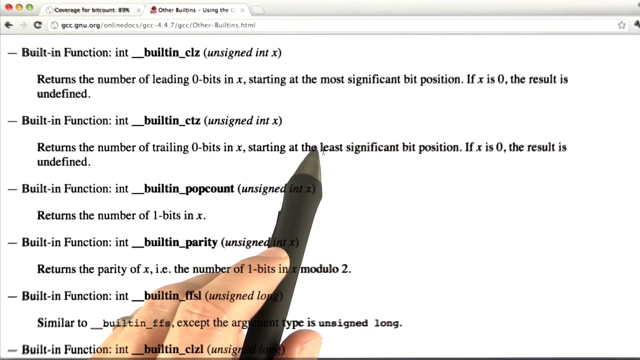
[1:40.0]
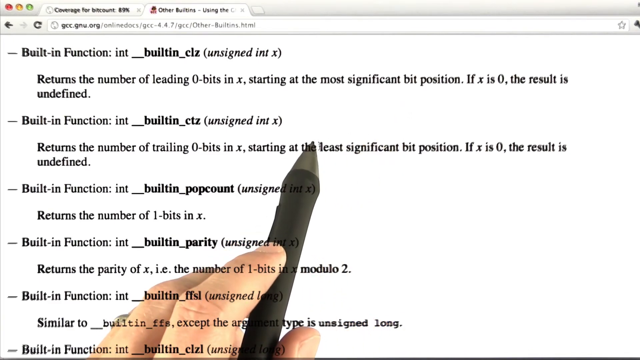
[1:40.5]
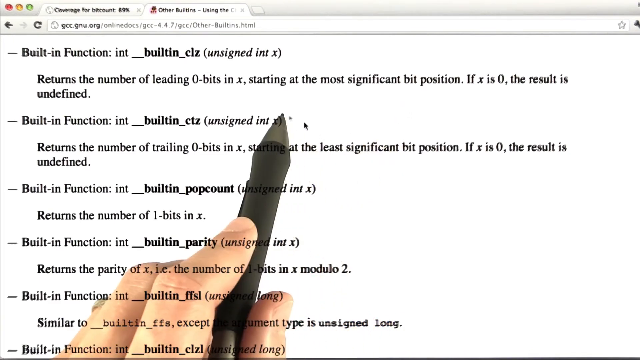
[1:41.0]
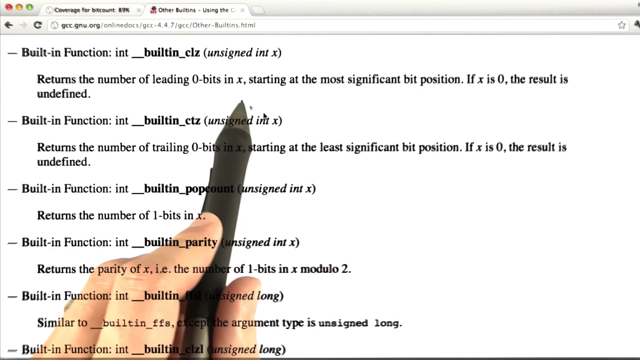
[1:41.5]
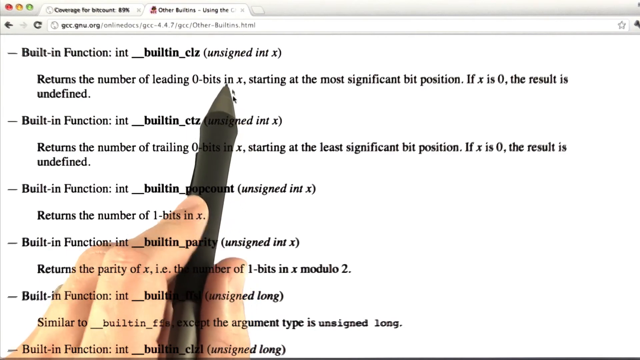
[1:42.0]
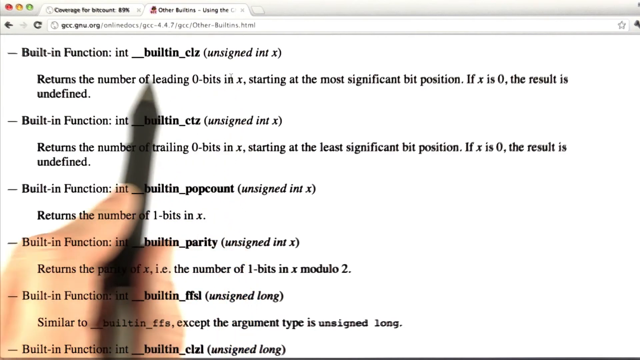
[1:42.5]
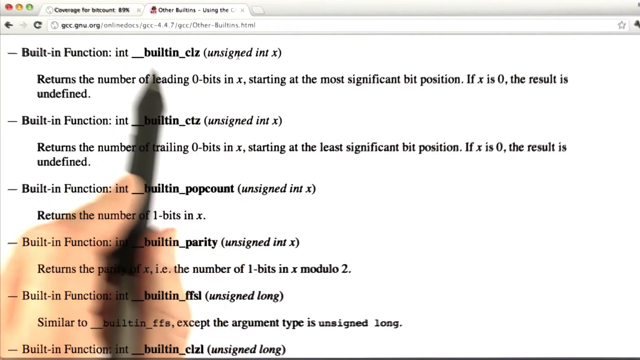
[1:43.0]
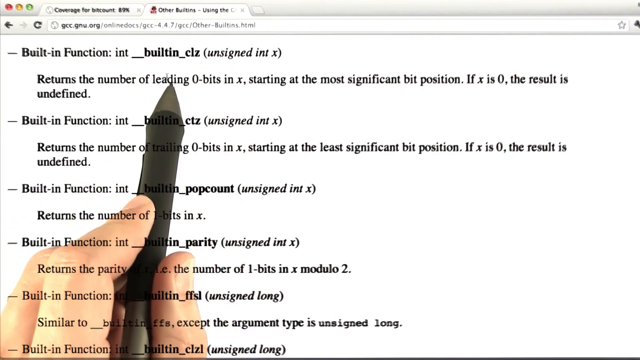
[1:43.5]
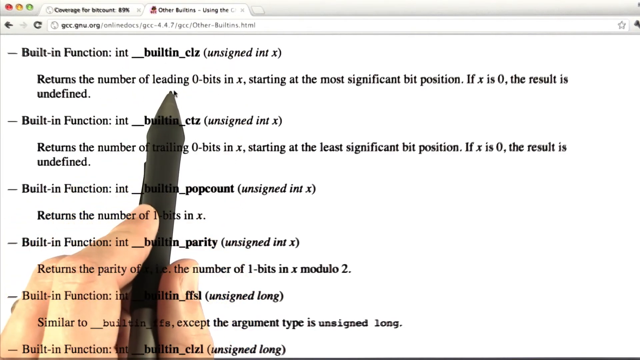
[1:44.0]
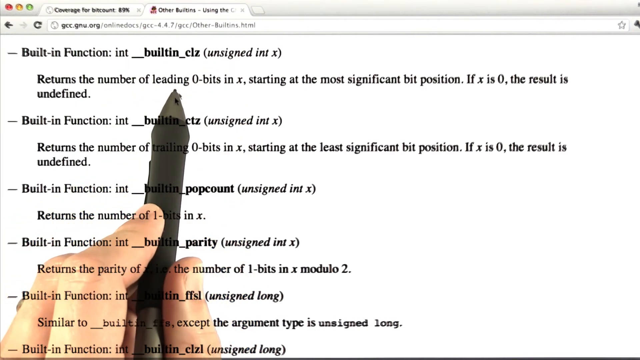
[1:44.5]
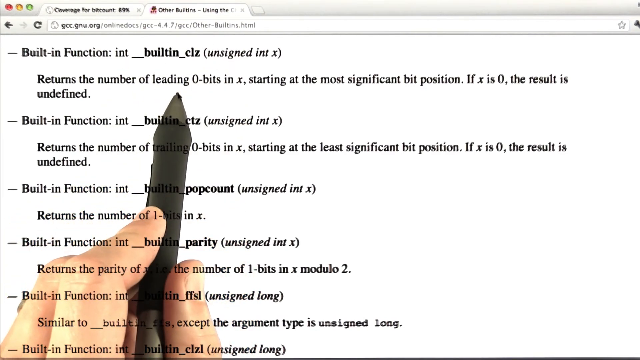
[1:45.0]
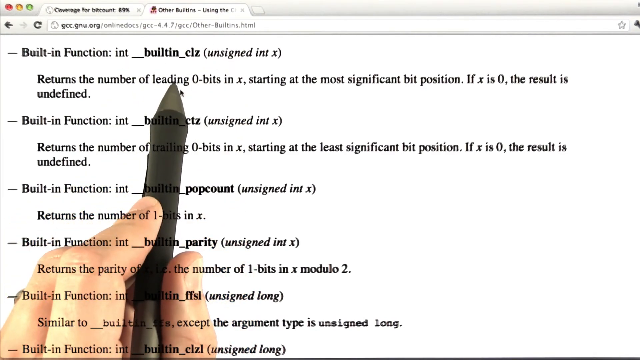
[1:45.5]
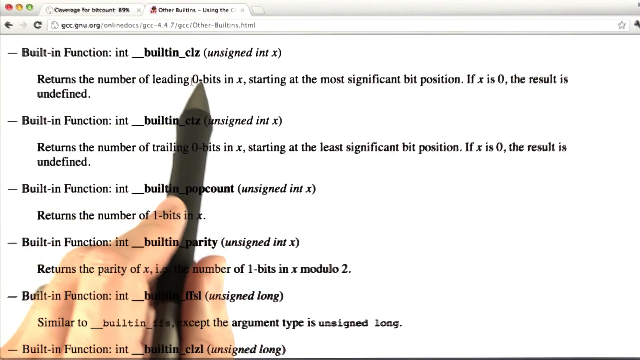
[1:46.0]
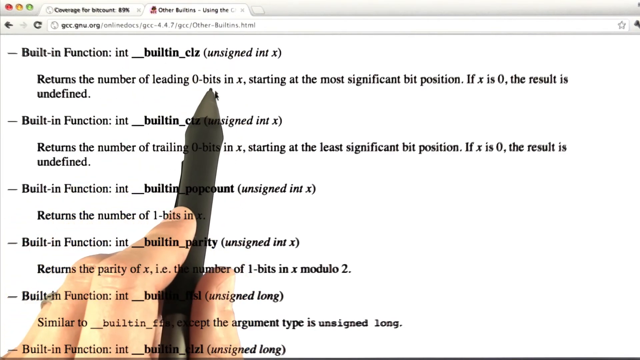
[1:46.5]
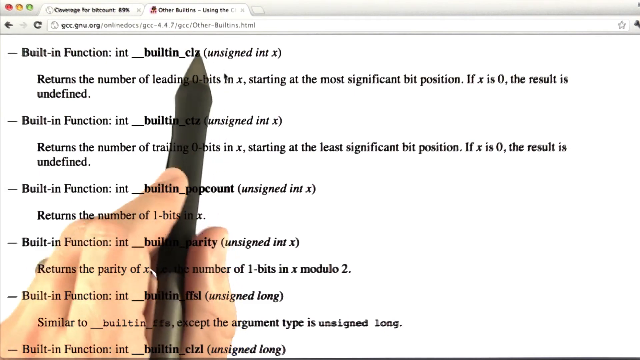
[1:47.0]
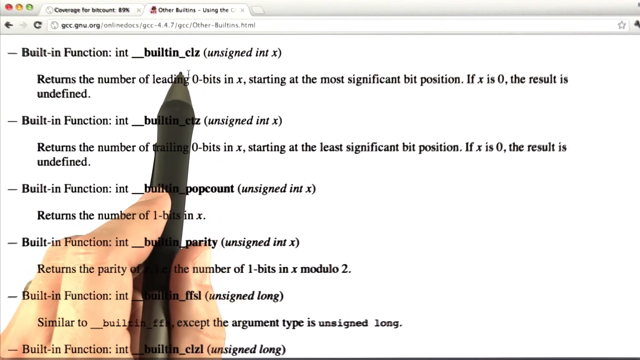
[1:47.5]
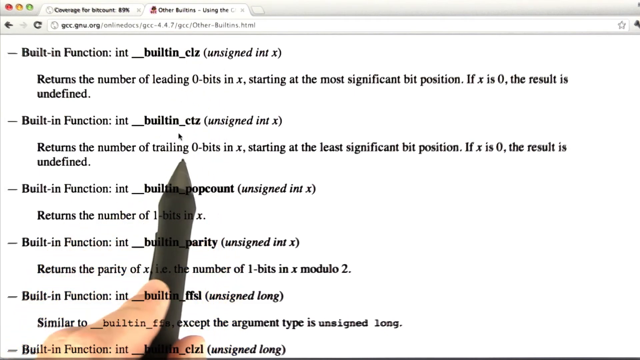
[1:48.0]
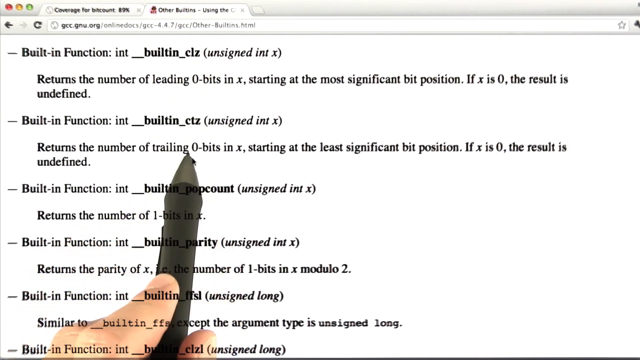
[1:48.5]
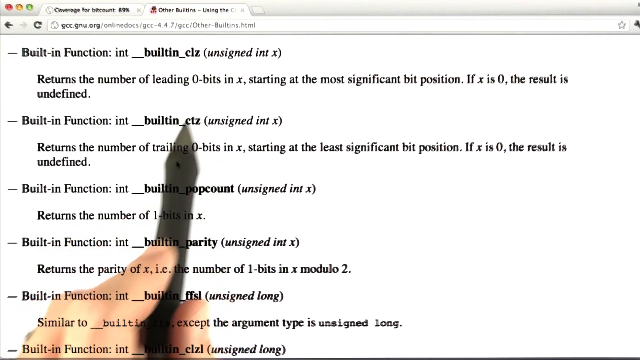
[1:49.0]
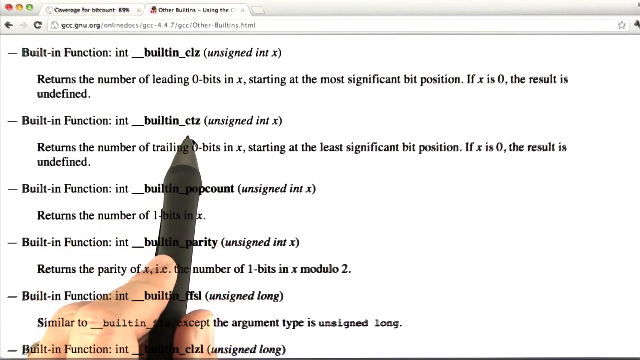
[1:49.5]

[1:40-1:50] HTML code is demonstrated on a computer screen with a white background. The instructor's hand and fingers are in the frame. His cursor is a stylus pen that he moves over the surface of the code to highlight things, showing different pieces of code in the built-in function area and highlighting areas with the cursor without leaving any marks. He stops on the second built-in functions line, which says "starting at least significant bit position". The code is in the built-in .html folder. The stylus pen is gray on the bottom, black in the center and gray in the back as he holds it, and it moves around continuously, encircling things without leaving any marks.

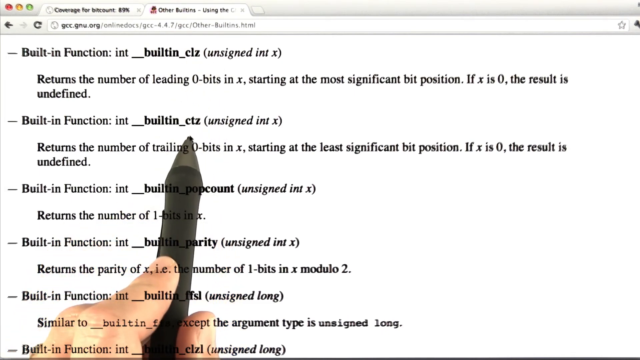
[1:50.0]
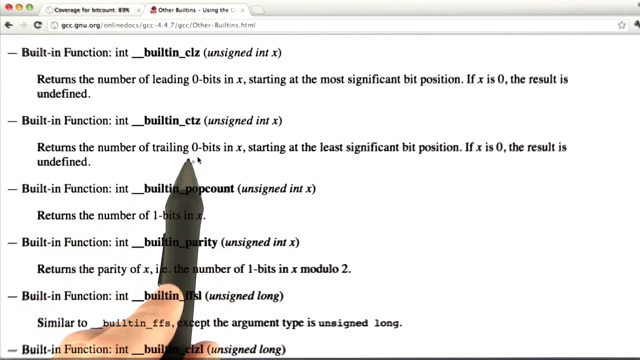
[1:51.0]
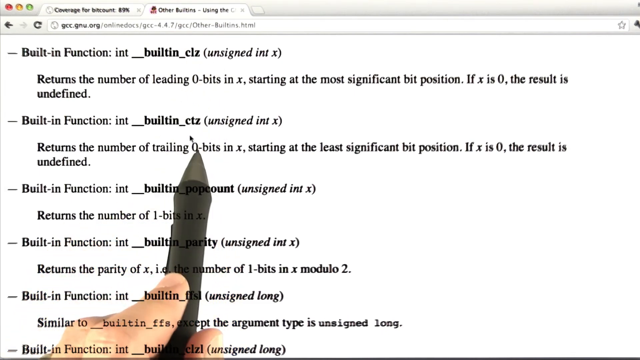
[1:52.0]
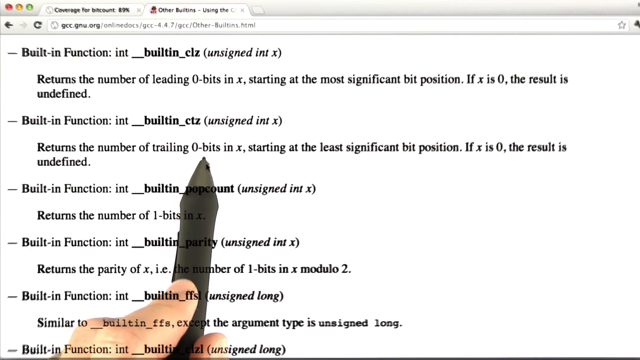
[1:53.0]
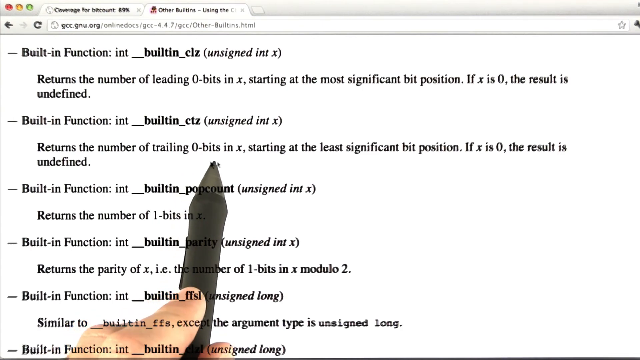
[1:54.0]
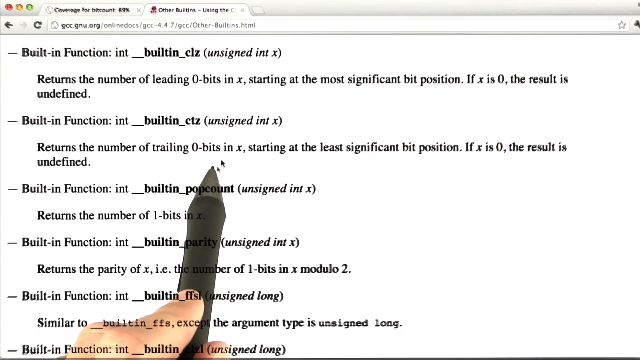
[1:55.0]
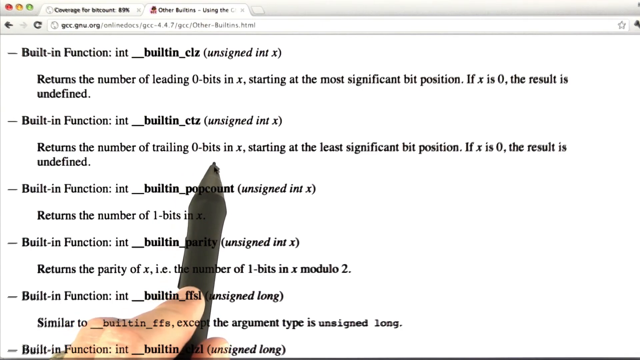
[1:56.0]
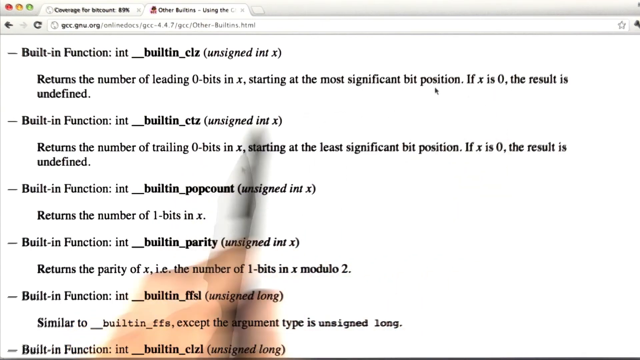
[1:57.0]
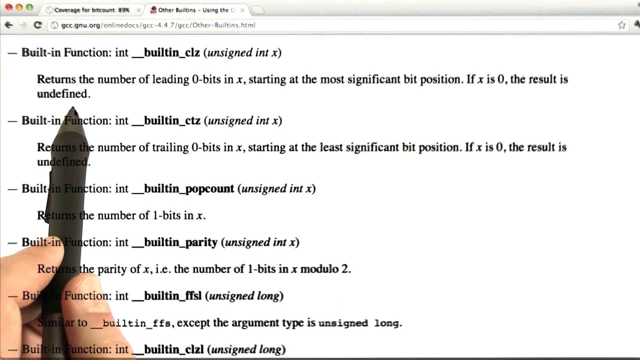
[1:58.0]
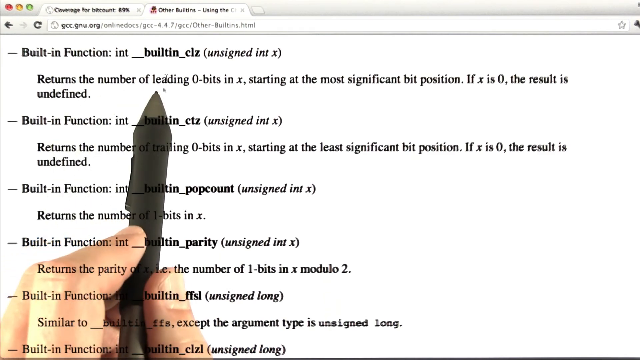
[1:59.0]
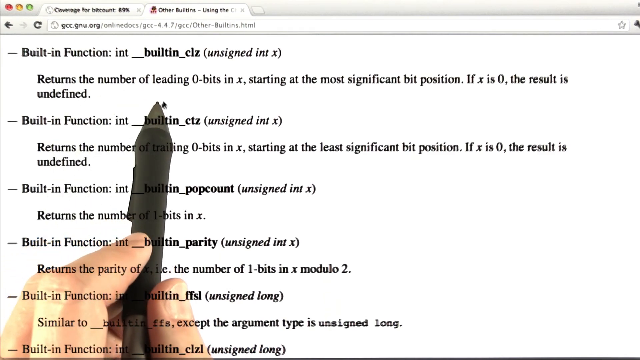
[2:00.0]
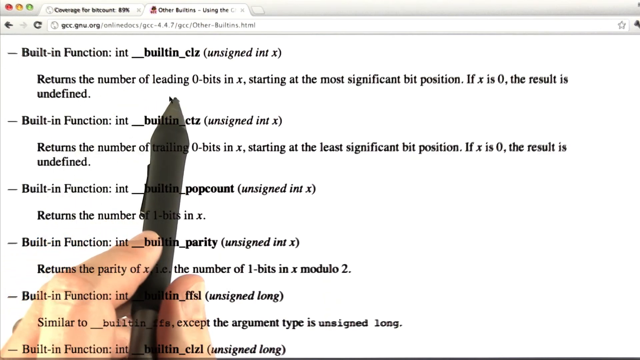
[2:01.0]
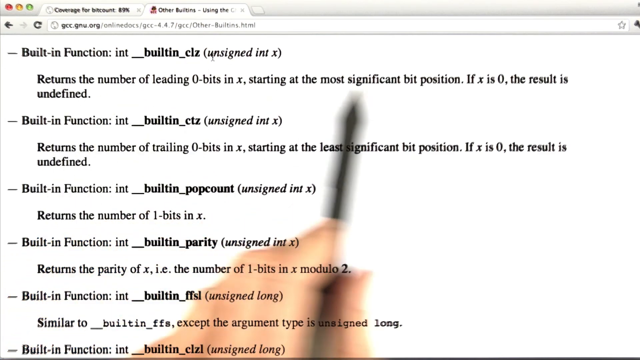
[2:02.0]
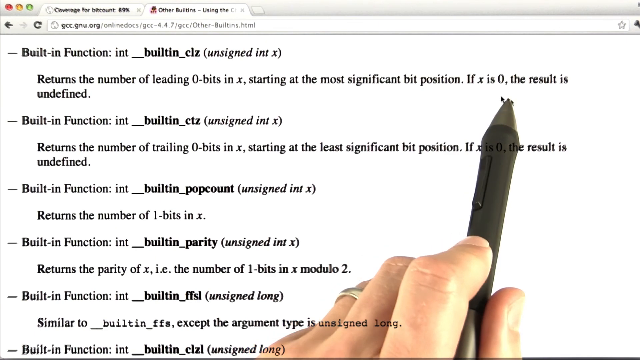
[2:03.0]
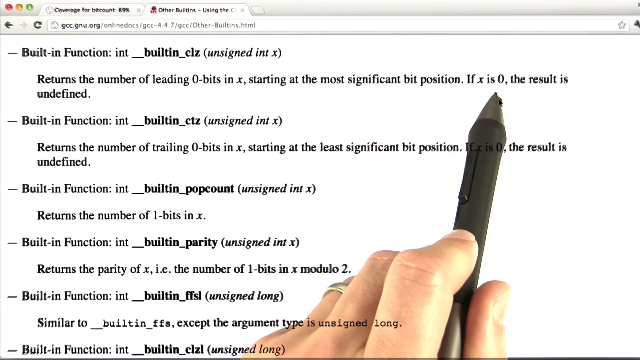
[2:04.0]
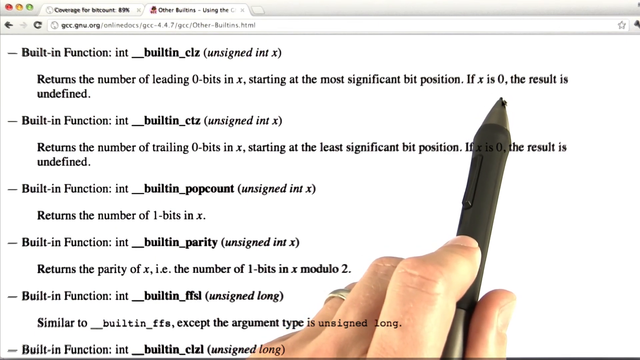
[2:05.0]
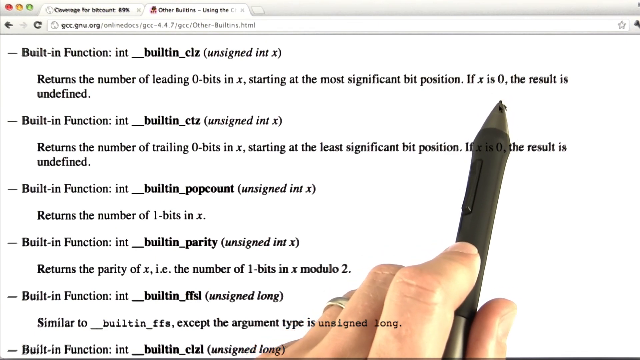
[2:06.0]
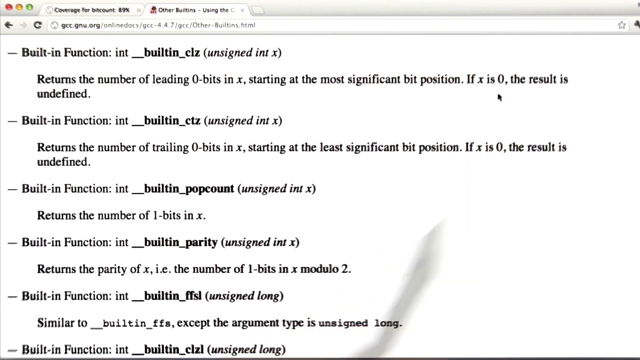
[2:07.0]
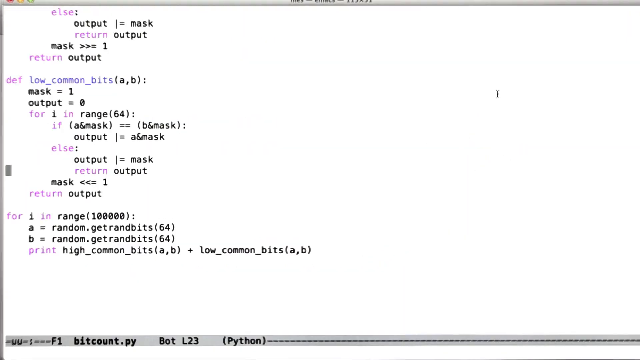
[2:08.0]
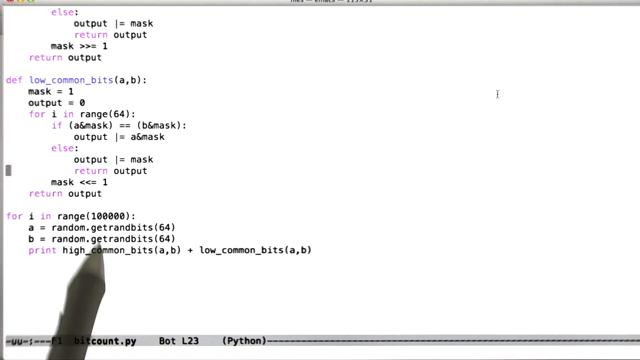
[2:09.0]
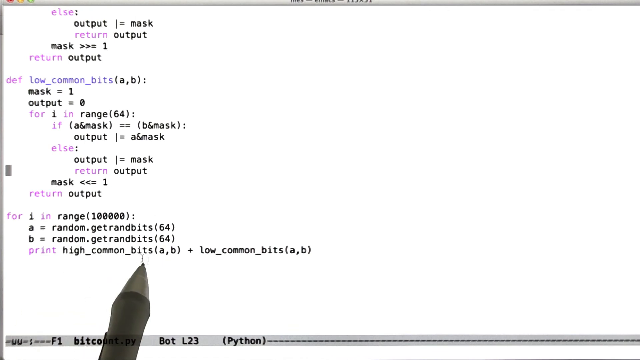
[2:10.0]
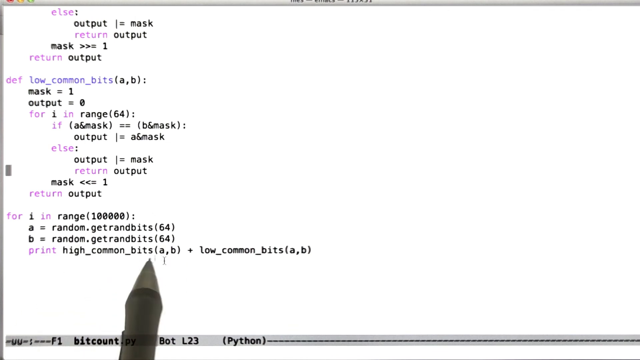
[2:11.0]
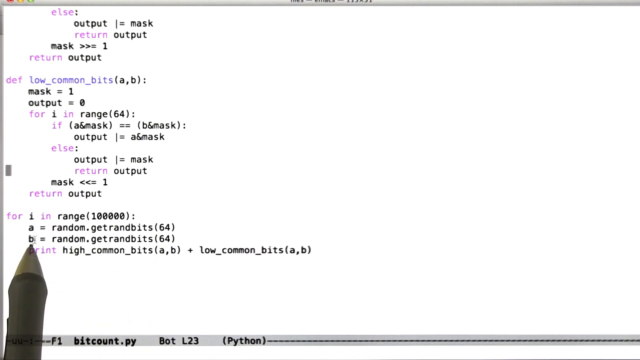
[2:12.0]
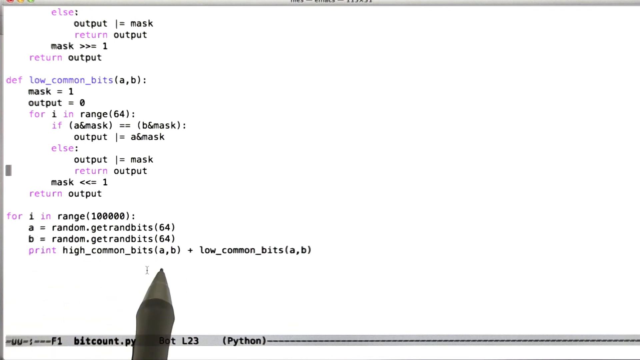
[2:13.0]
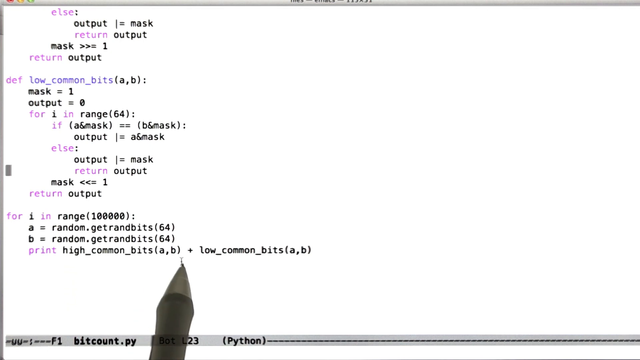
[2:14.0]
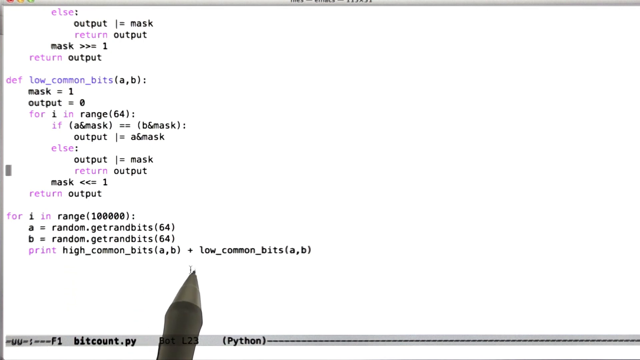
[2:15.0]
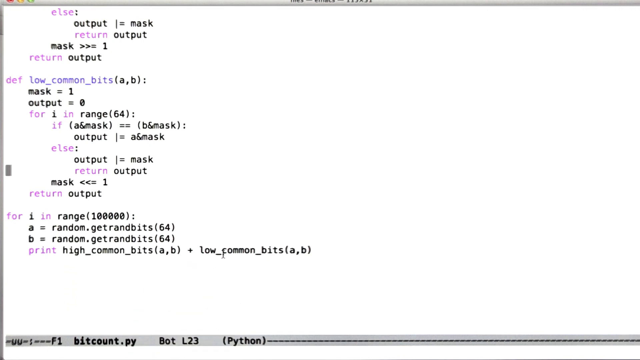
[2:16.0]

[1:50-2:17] An instructor moves a gray stylus pen with a black center across the screen, and the arrow of a cursor follows the pen as he circles bits of HTML code. The code is in the folder built-ins.html. He circles things without leaving any marks, moving the cursor from one item to another across lines with a built-in function and assorted code. The view then changes to a different screen of the actual code, showing "high common bits", A, B, "low common" and so on, and then goes back to the other screen showing the built-in functions, "int" and different code lines. The instructor's hand is white, holding and moving the stylus cursor pen over the lines of HTML code.